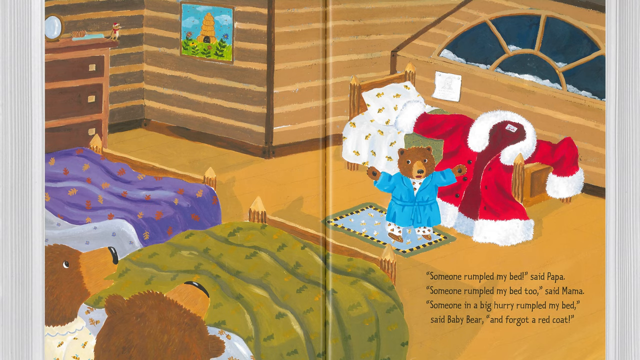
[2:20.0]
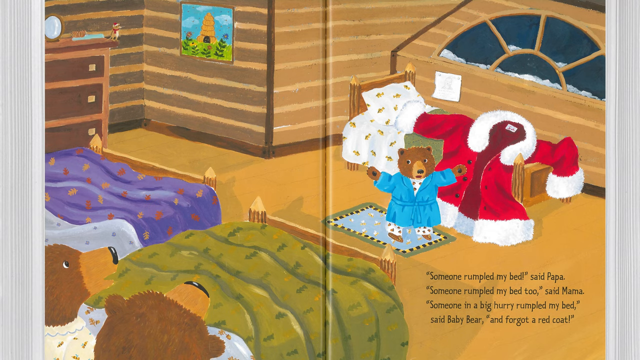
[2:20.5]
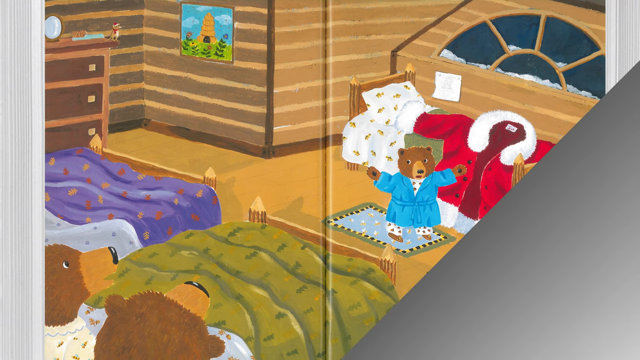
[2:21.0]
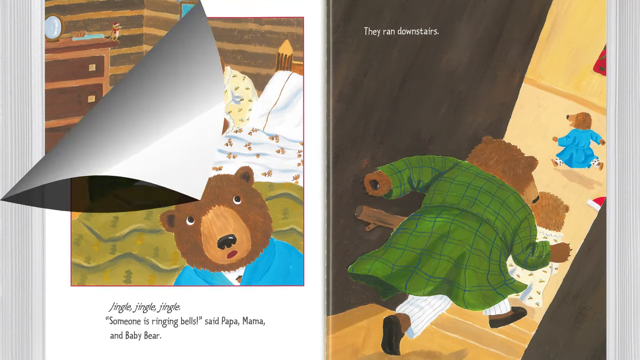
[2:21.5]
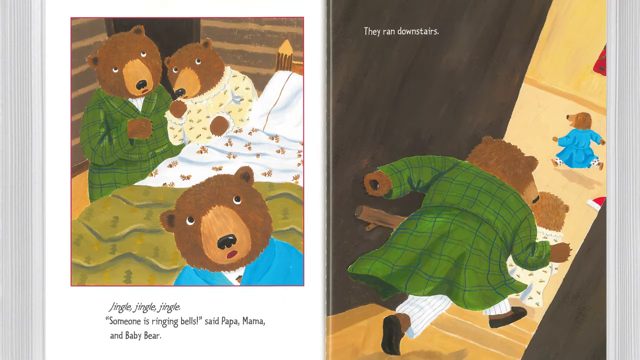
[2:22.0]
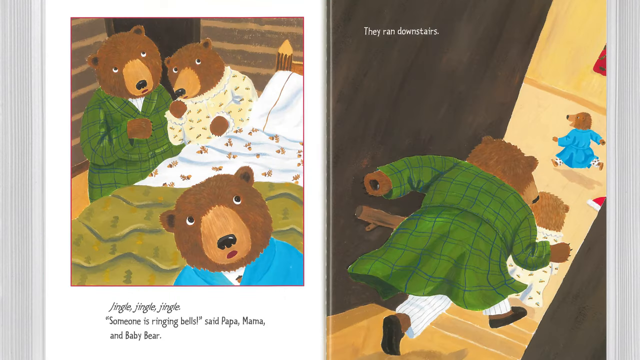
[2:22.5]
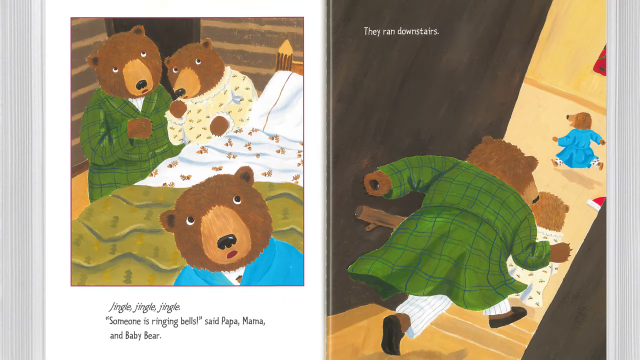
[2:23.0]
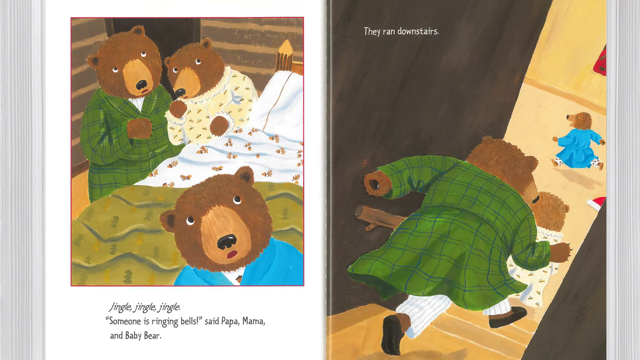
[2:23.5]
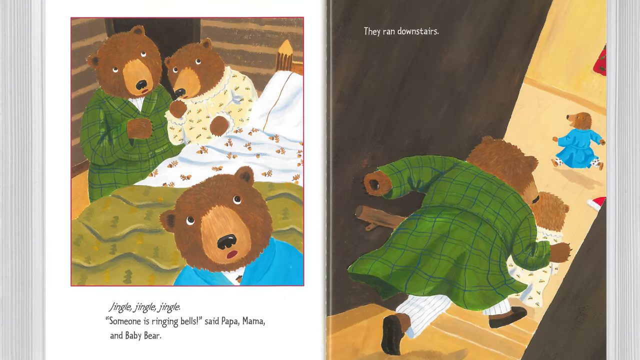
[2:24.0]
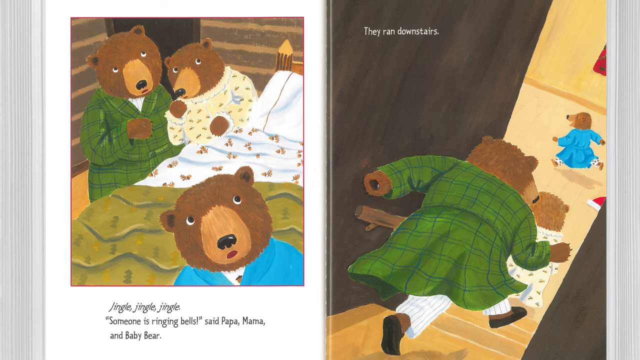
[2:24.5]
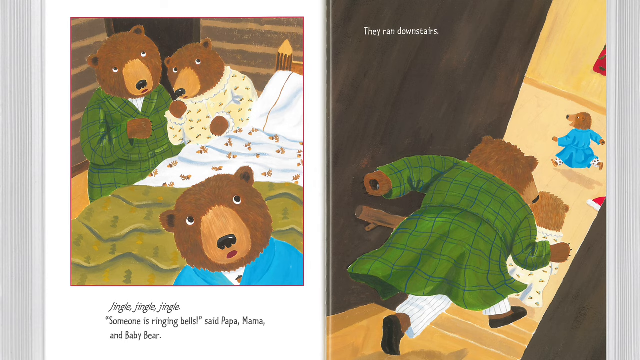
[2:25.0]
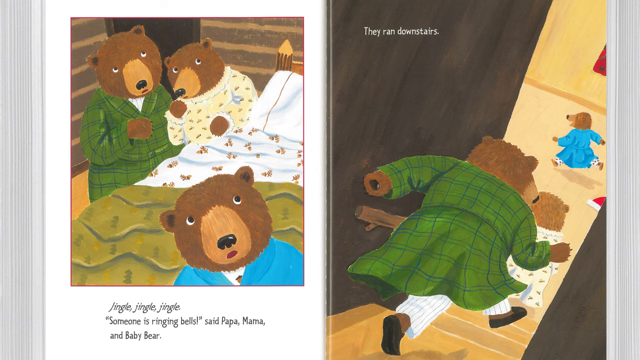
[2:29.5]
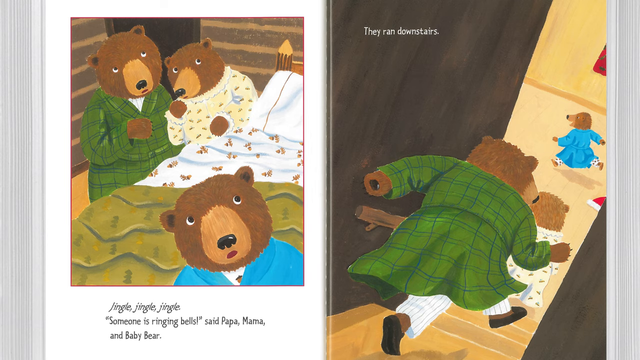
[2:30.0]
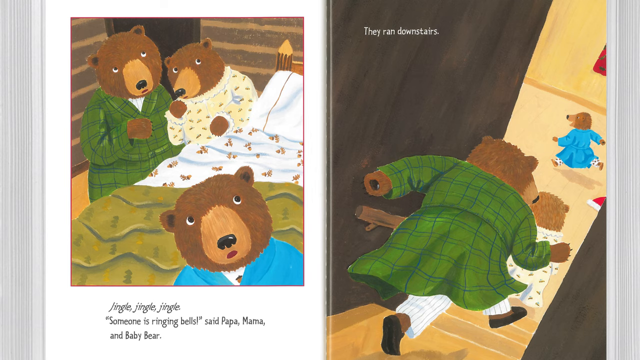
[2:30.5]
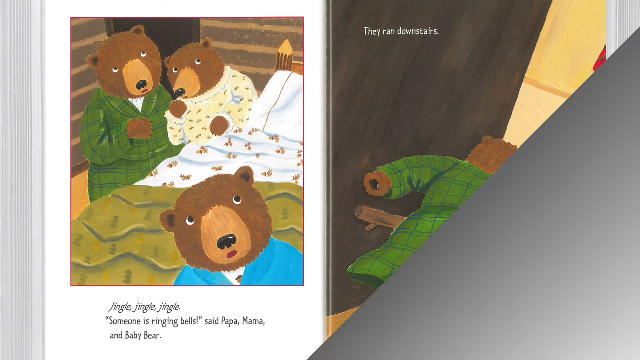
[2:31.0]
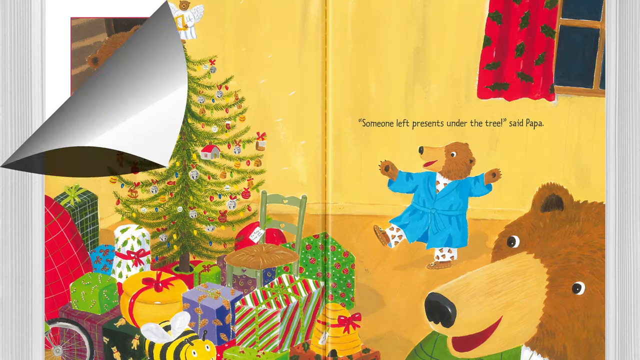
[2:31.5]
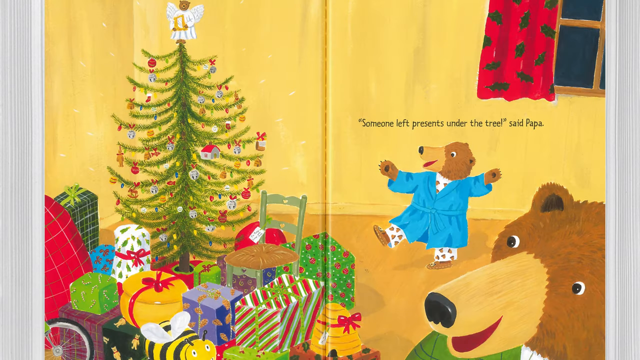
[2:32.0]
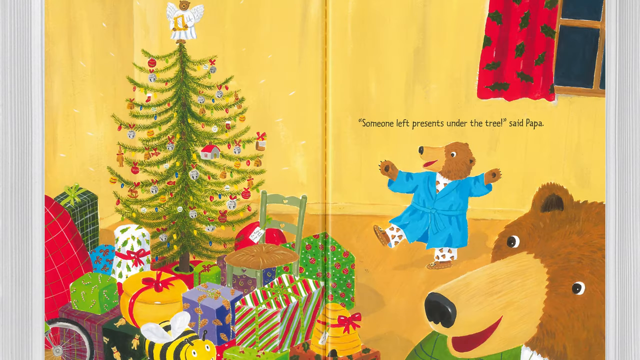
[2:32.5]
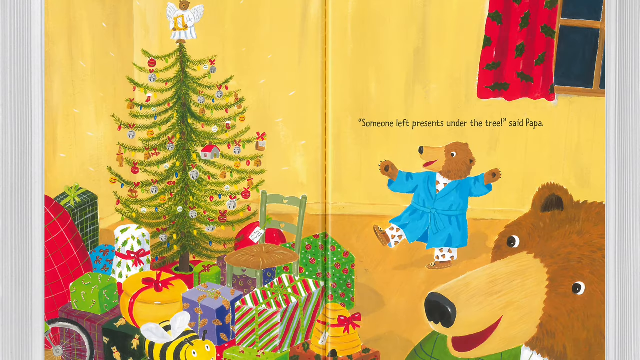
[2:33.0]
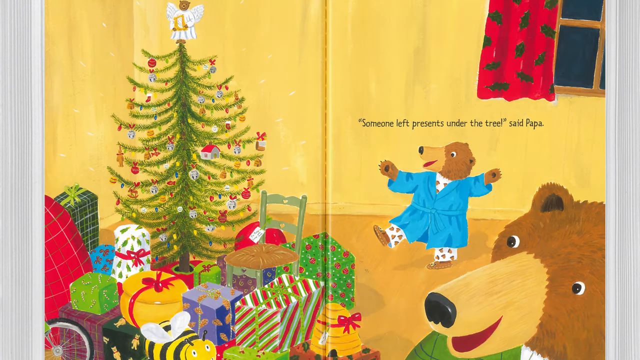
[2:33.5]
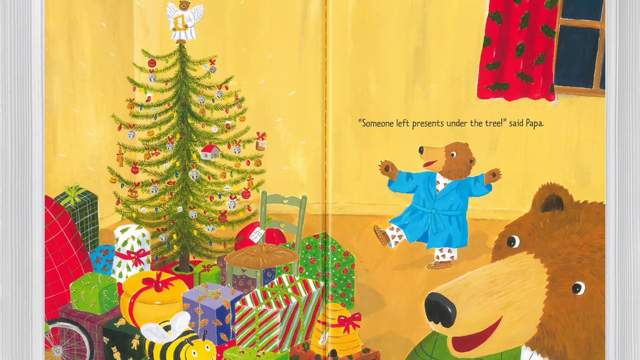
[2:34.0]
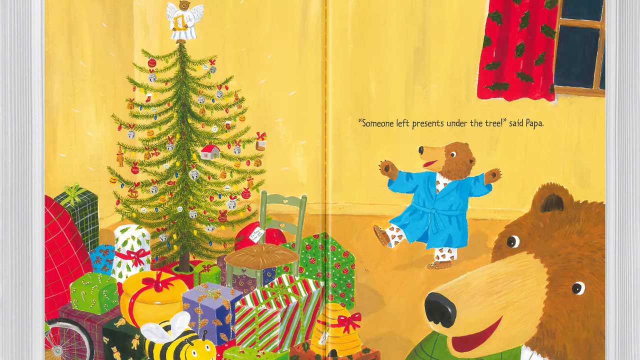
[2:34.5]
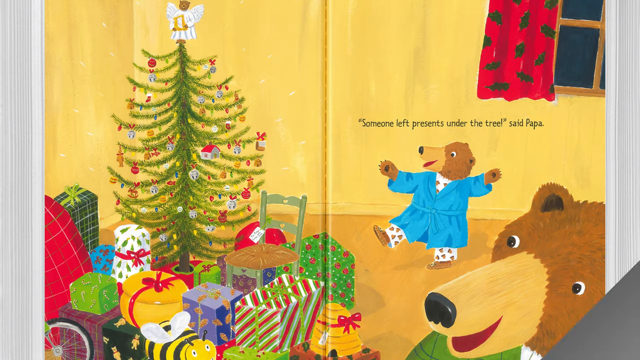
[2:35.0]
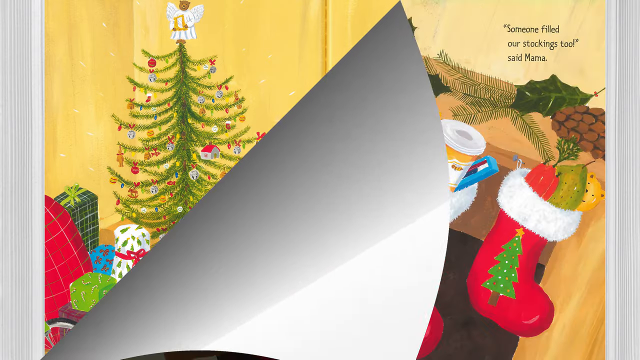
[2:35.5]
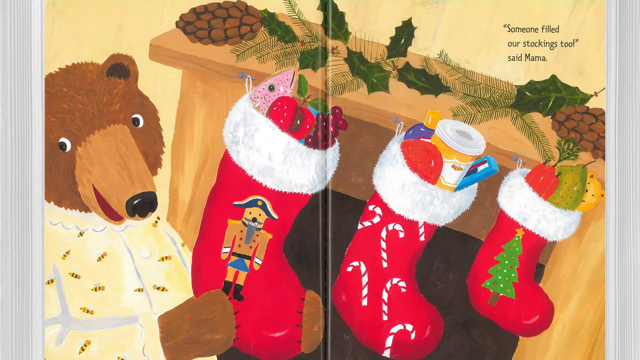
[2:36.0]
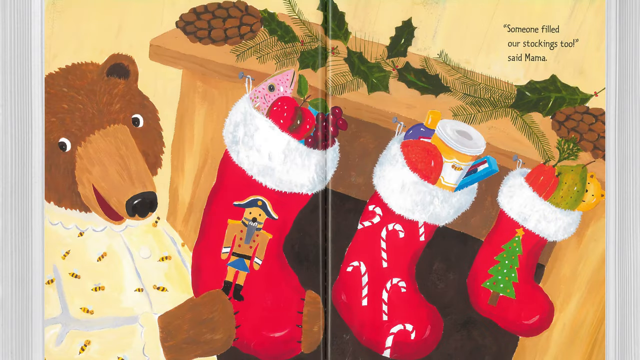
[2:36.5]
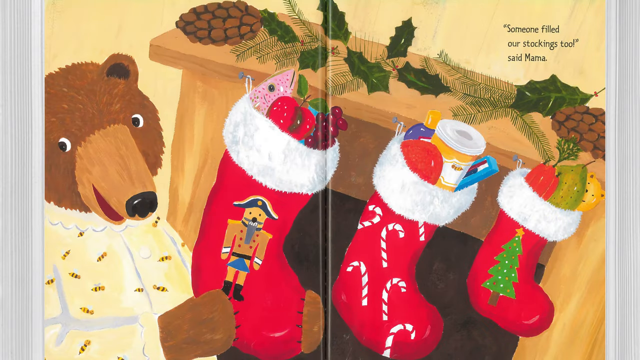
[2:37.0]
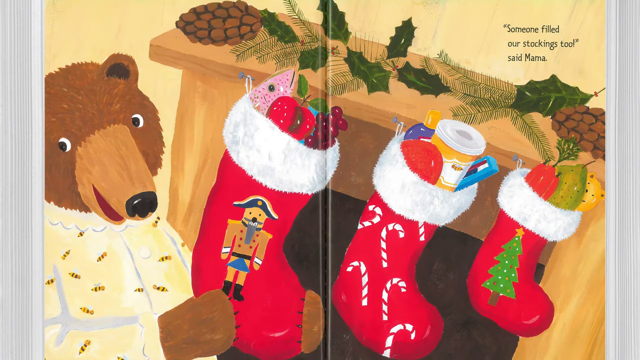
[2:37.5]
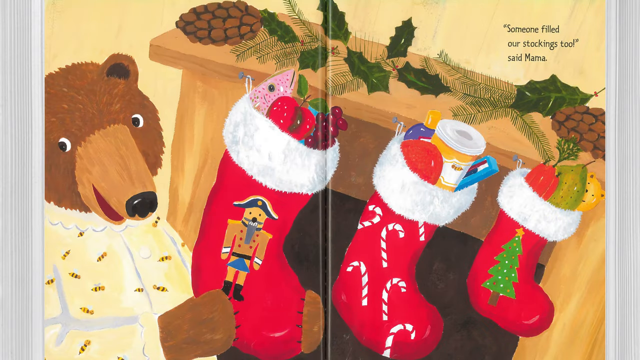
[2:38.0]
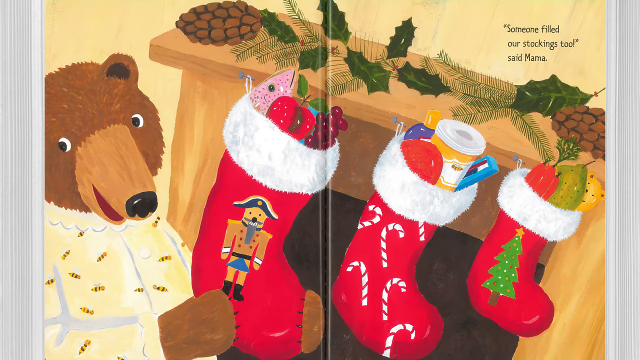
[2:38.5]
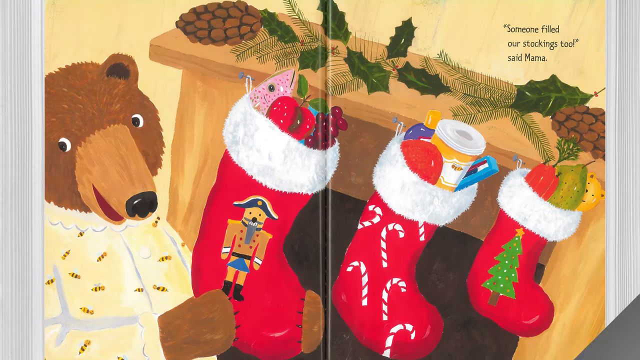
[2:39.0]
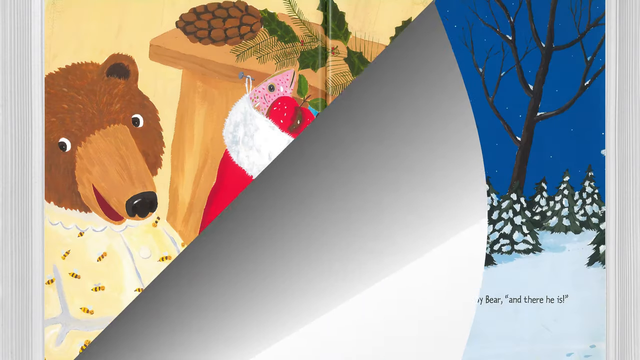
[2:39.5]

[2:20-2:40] In the next scene the bears look very sharp, as if they seem to have heard a sound. The book says: "jingle, jingle, jingle, someone is ringing bells." Papa, Mama and Baby Bear are standing by their bed when they hear it, and they immediately run downstairs. In the picture, Baby Bear runs first, then Mama Bear, then Papa Bear, and Baby Bear looks rather excited as he runs. The next scene shows the Christmas tree with lots of bells and gifts filling the bottom: a gift in the shape of a bee, many other colorful gifts, a chair, a bicycle and many others that are wrapped up. The bears are all very happy, and the text says, "someone left presents under the trees." In the next scene Mama Bear stands next to the three stockings and says, "someone filled our stockings too," and there is lots of food inside the stockings.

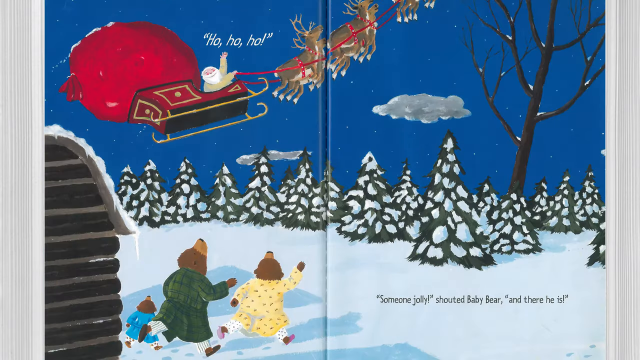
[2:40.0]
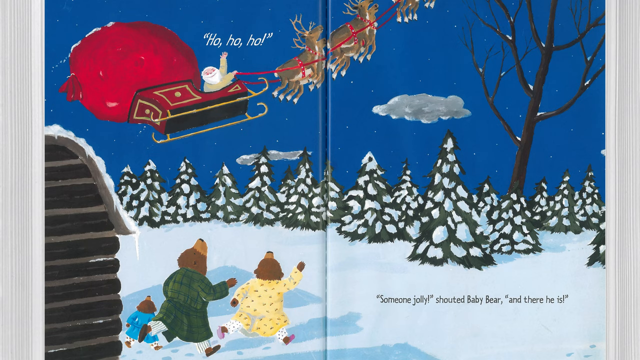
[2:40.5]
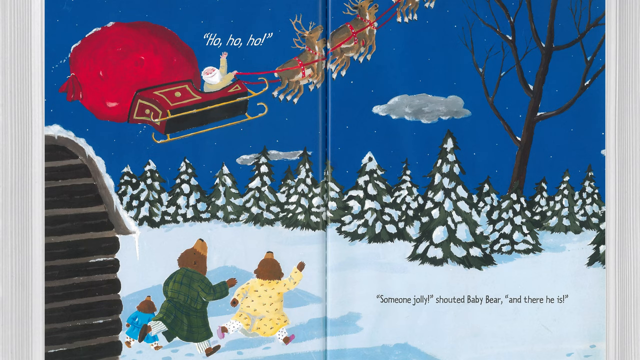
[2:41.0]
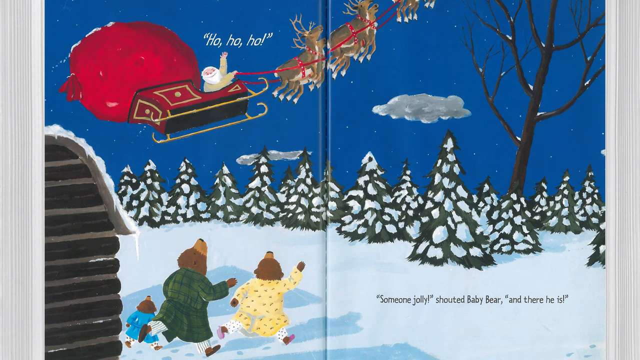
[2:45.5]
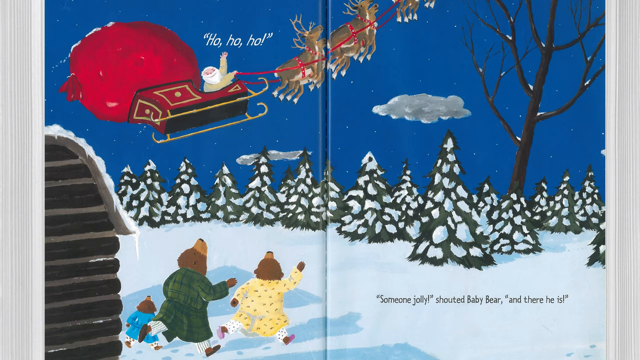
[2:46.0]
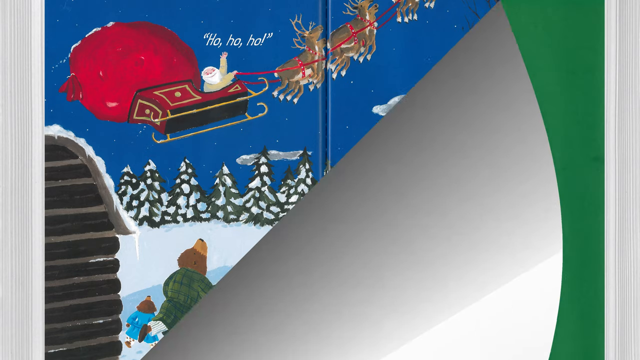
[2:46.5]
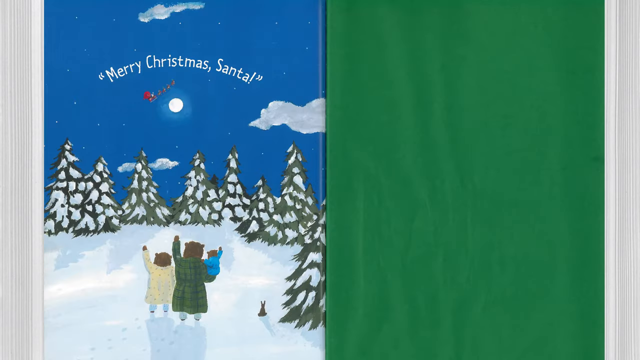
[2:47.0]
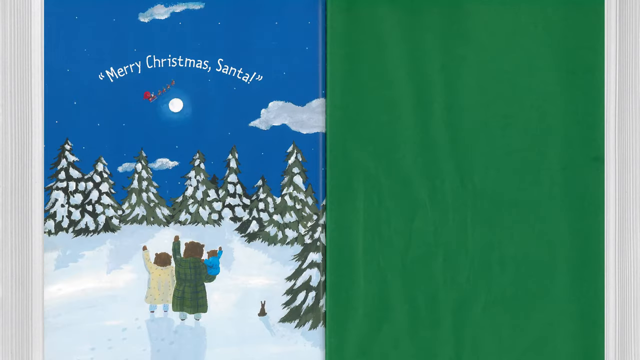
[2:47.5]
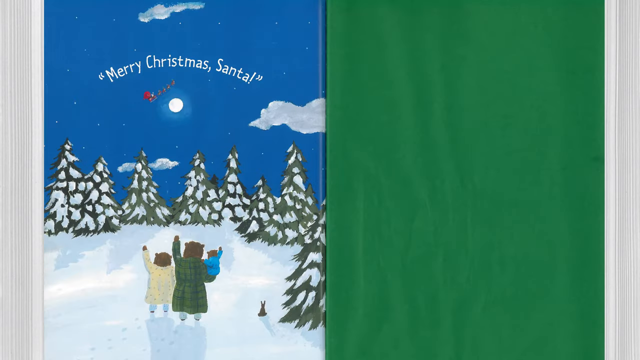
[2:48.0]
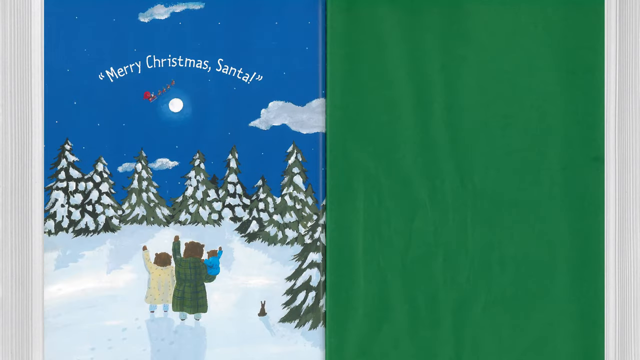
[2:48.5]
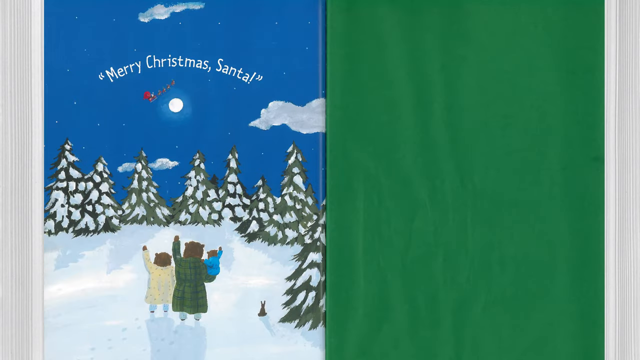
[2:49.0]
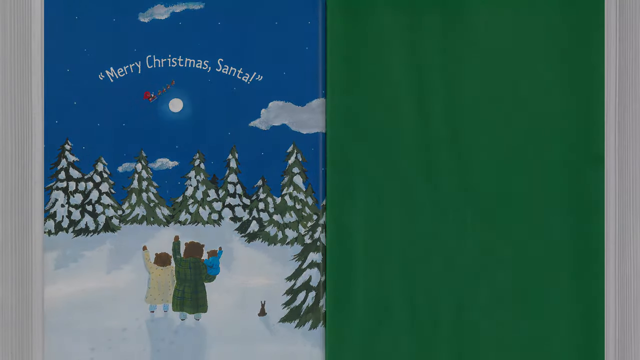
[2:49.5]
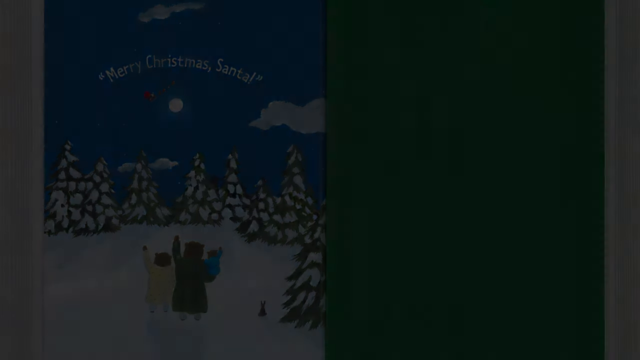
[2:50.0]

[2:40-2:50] Happy to find the Christmas tree and their stockings filled with gifts, the bears run out of their house, suspecting it was Santa Claus, and look up at the sky. They see Santa without a hat or cloak, sitting on a sleigh, waving back and saying "ho ho ho." At the back of the sleigh is a big red bag filled with gifts, and six reindeer are visible pulling the sleigh together. "Someone jolly," shouts Baby Bear, "and there he is." In the last scene the bear family continues to wave as Santa flies further and further away.